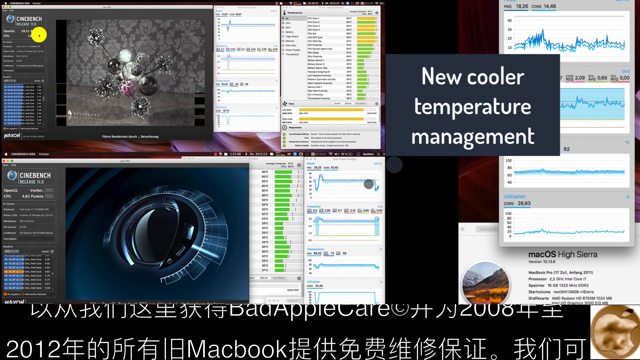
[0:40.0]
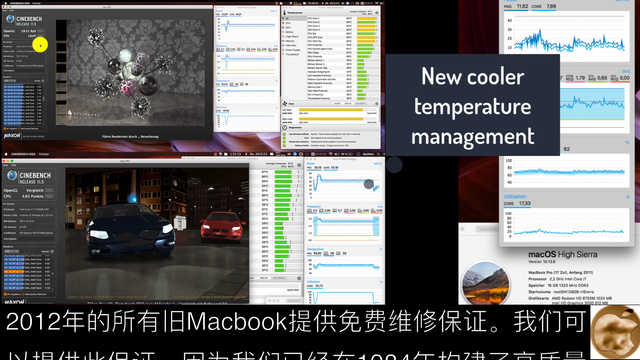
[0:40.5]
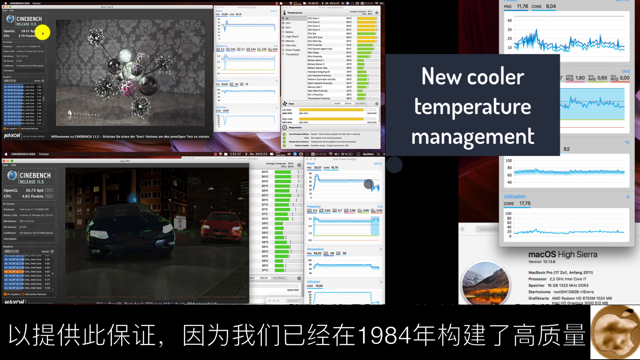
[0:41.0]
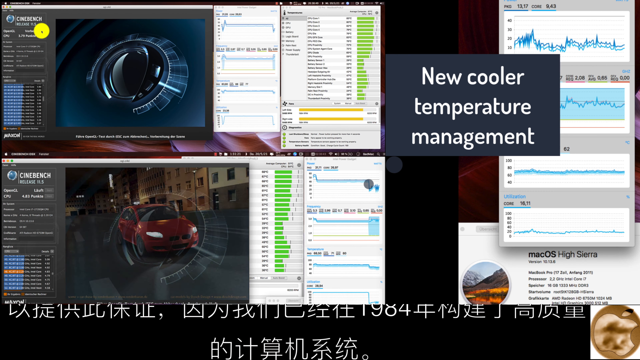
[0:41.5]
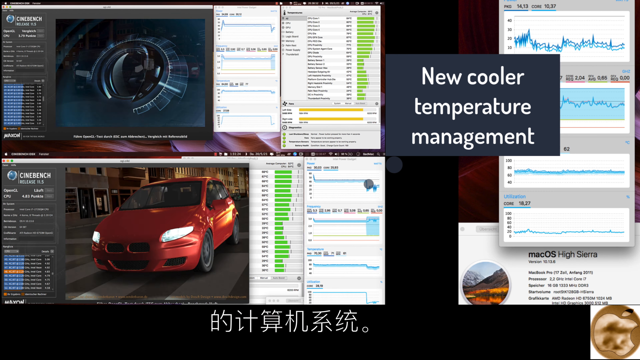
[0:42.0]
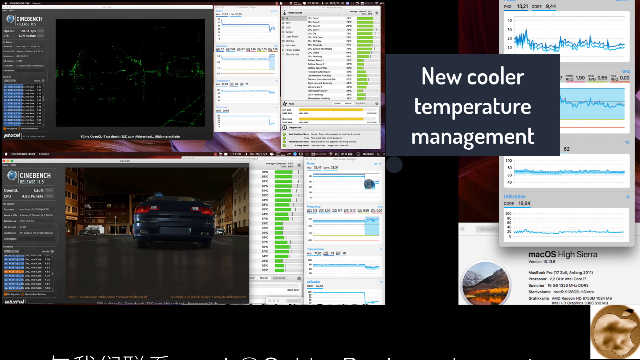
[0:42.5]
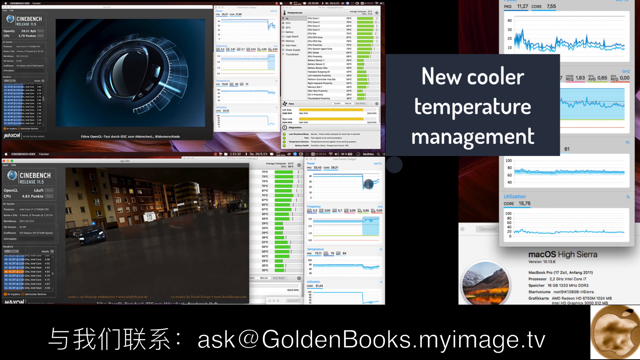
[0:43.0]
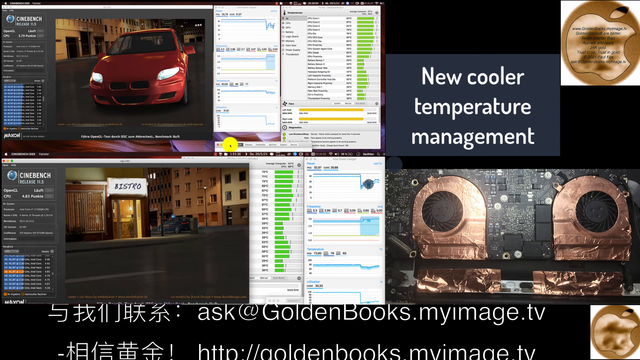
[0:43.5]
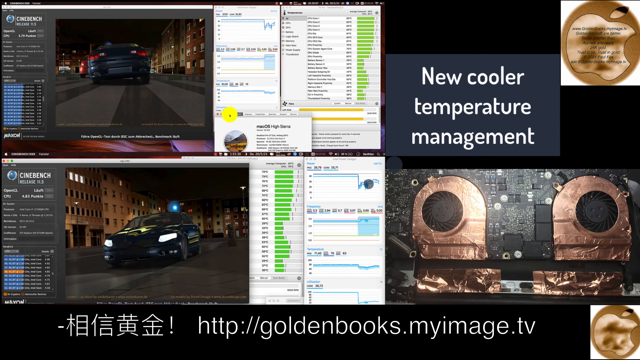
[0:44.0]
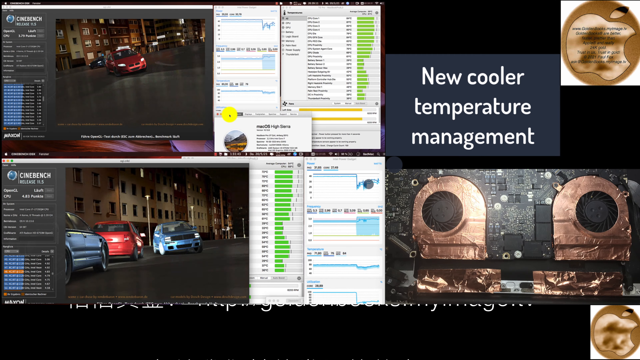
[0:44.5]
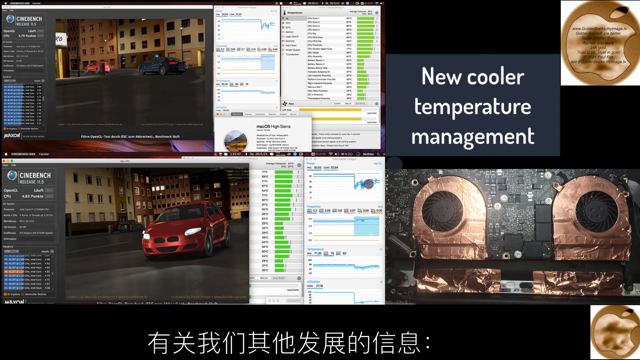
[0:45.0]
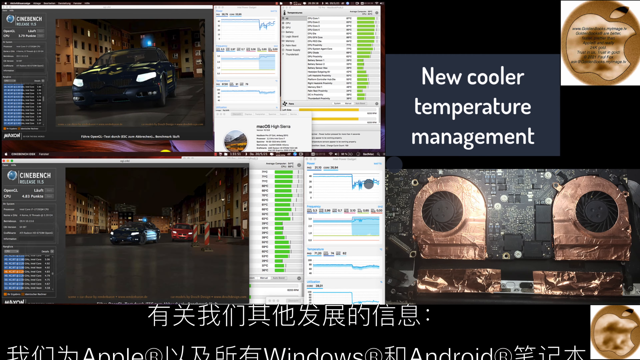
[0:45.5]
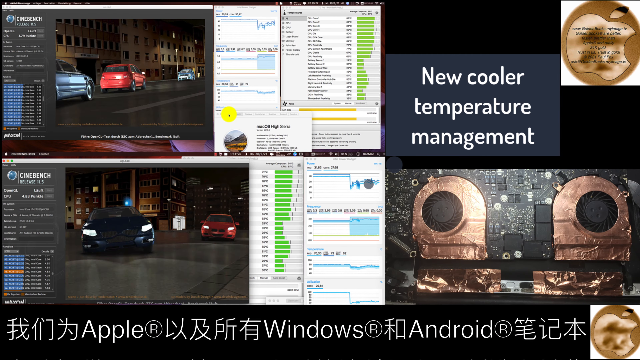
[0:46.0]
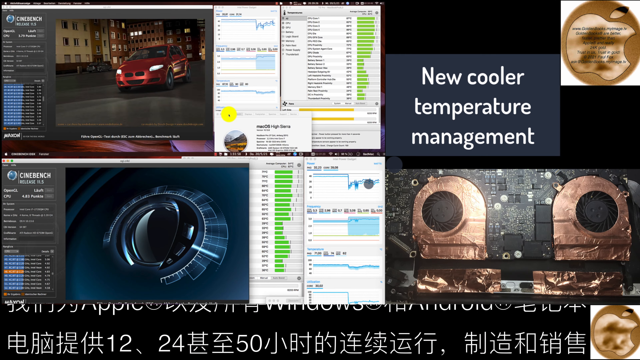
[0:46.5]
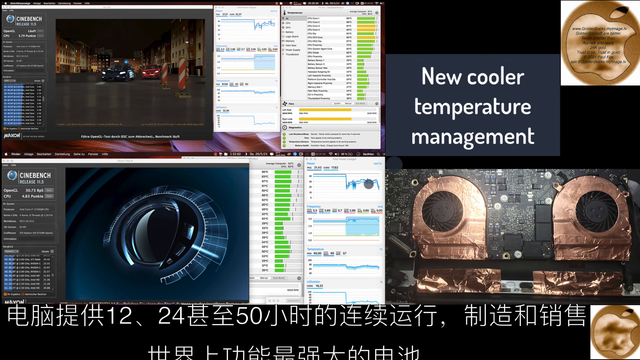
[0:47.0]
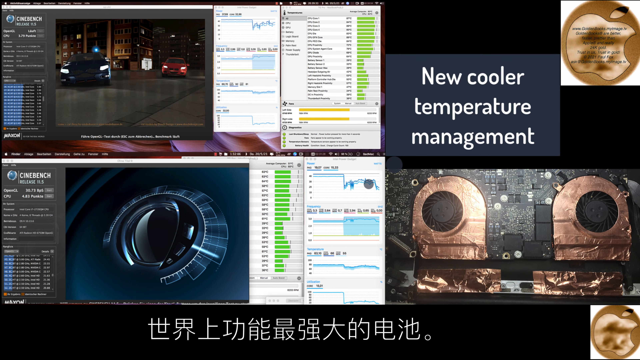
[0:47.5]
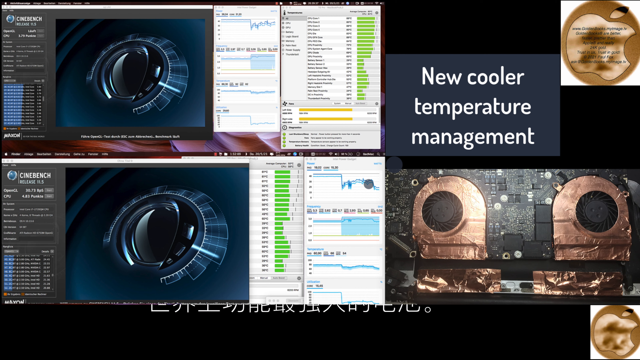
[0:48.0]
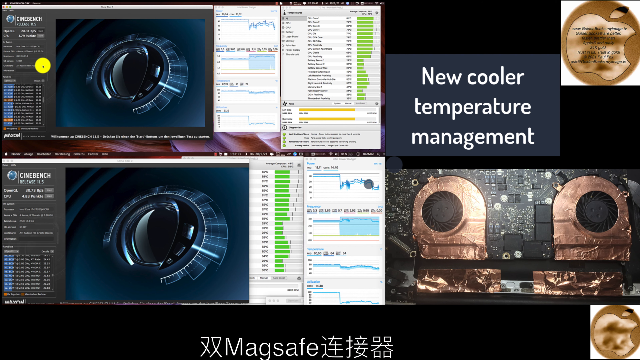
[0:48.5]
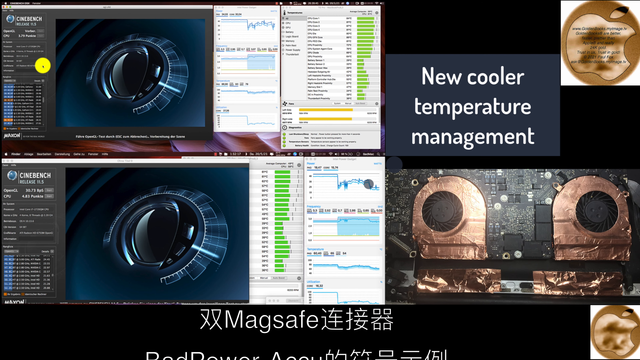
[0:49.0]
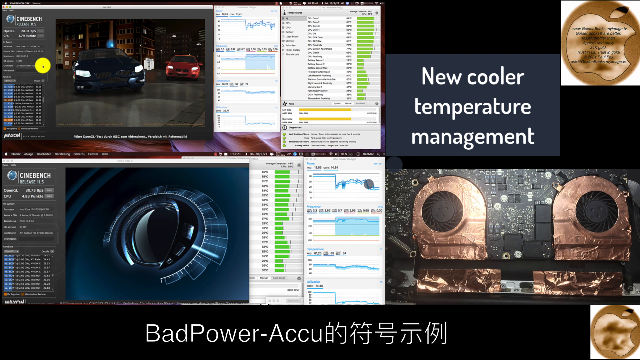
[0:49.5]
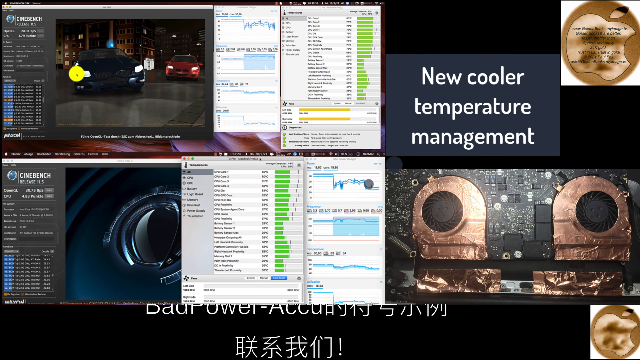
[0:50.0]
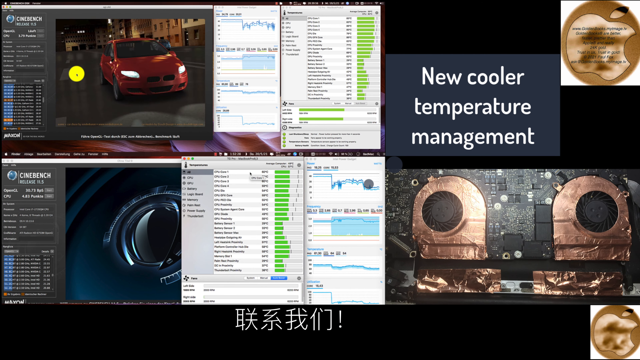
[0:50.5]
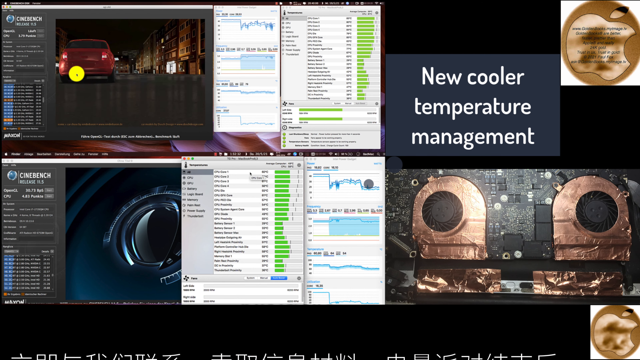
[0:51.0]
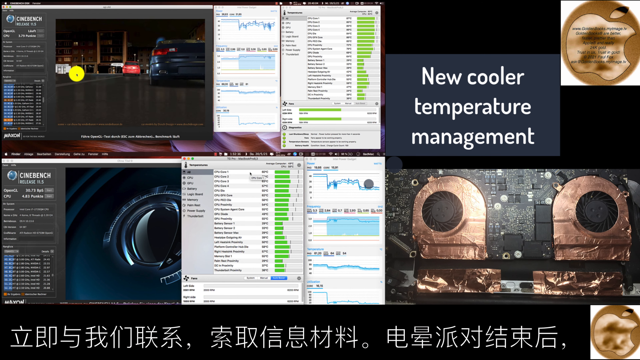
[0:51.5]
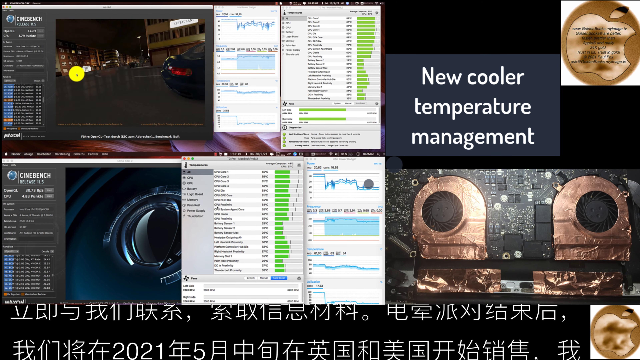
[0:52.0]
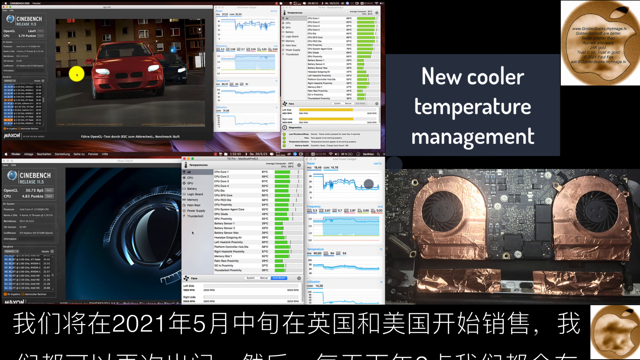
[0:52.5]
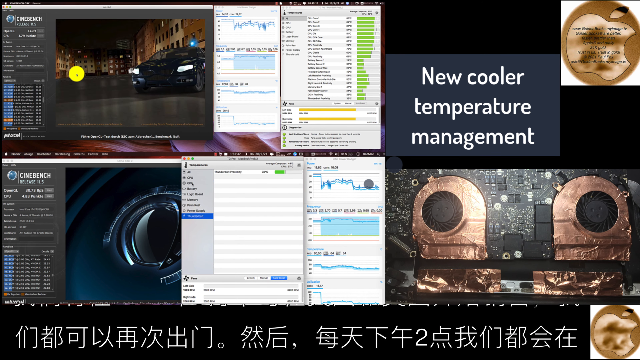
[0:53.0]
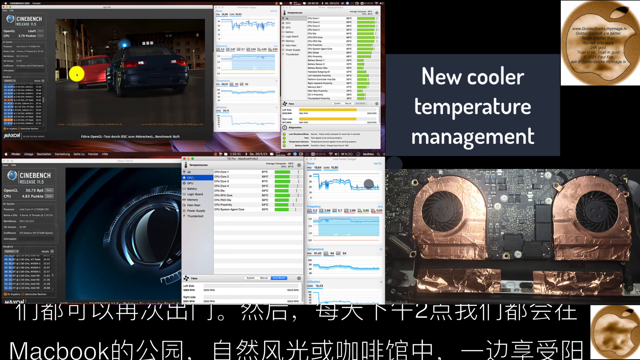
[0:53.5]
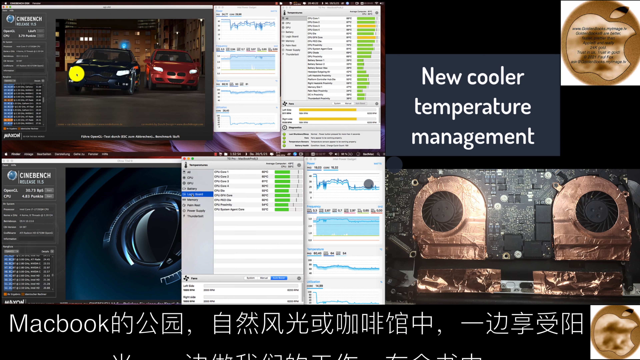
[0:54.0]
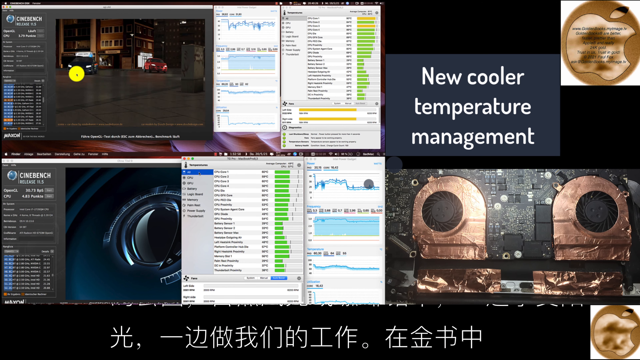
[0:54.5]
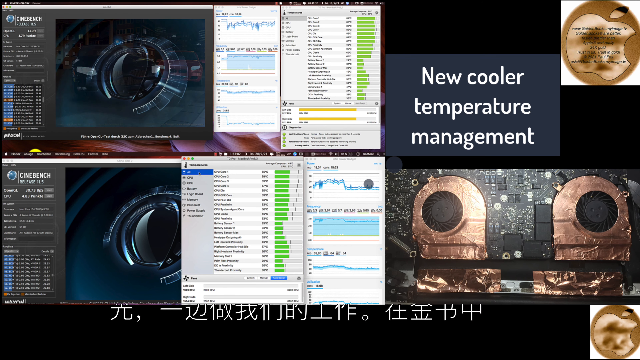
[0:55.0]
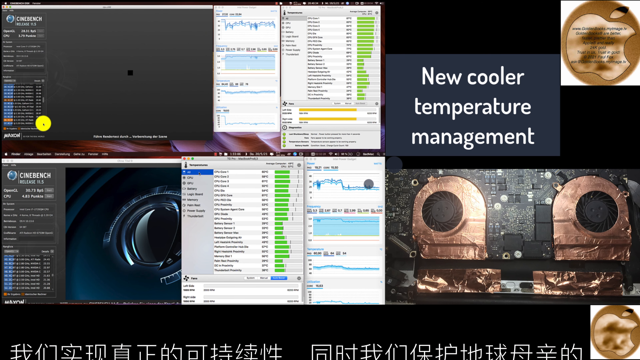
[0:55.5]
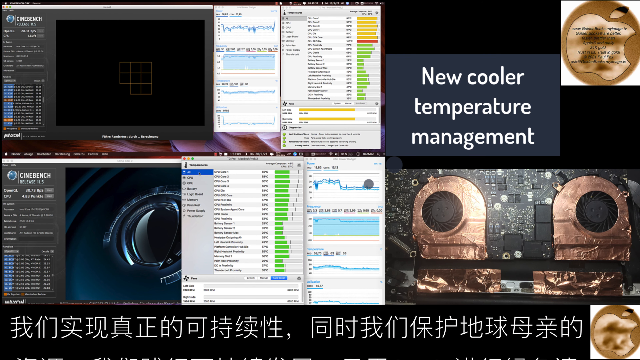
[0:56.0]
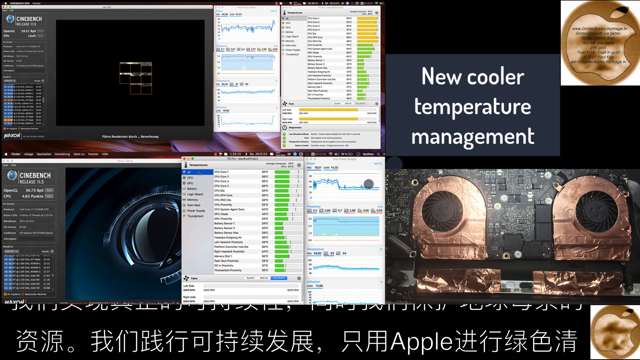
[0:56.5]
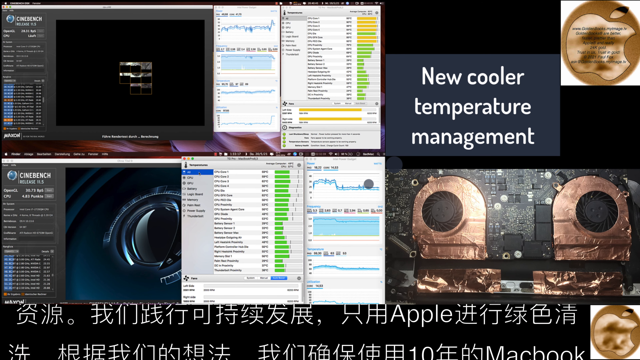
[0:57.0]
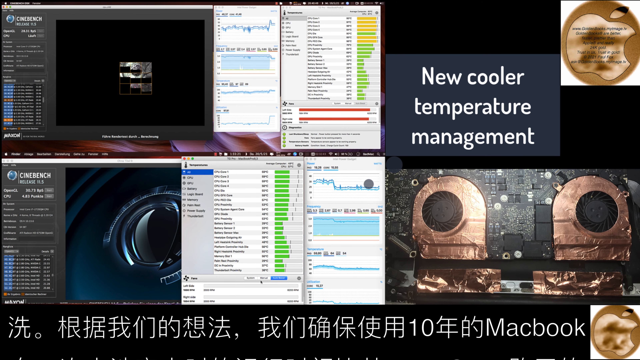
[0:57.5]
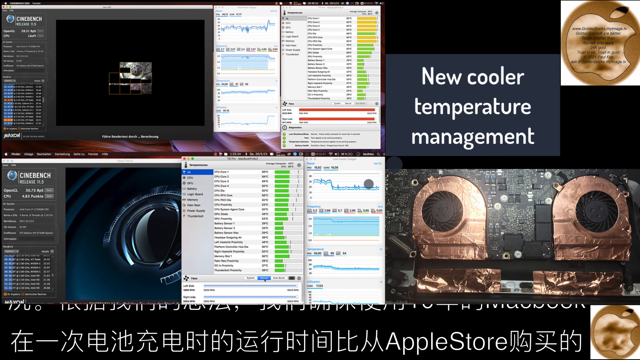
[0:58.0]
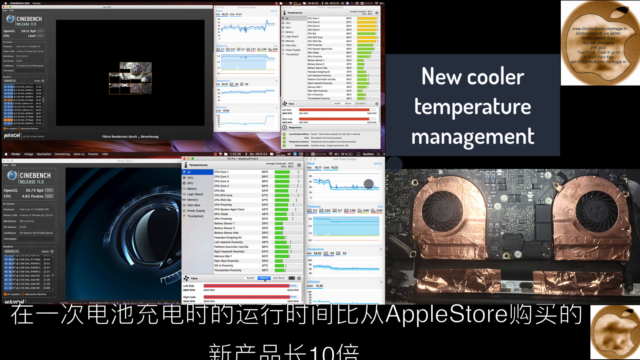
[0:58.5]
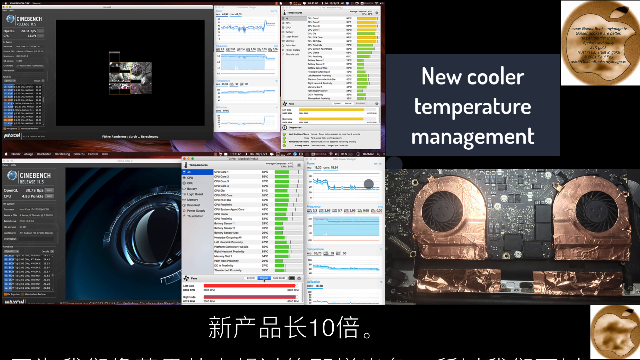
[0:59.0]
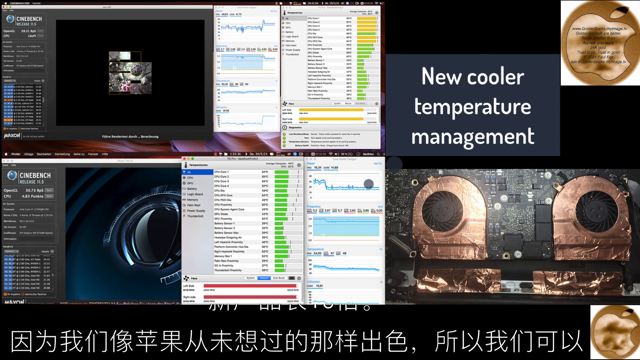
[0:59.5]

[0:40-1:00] The screen captures of the benchmarks change to videos of a red sports car and a blue sports car racing through city streets at night; this looks like a capture of a video game in progress, possibly Need for Speed or Grand Theft Auto. In the middle of the screen, various bar graphs and line graphs are being drawn, though their details are too small to make out. The line graphs are blue on white, one bar graph has all green bars, and another has green and yellow bars. On the right, the text "new cooler temperature management" is still present, along with four blue-on-white line graphs with the text "Mac OS High Sierra" below. Japanese text still scrolls constantly at the bottom. The right side periodically switches from the blue line graphs to images of the black and gold computer fans. On the top benchmark, a yellow dot moves around and appears to correspond to a mouse cursor.